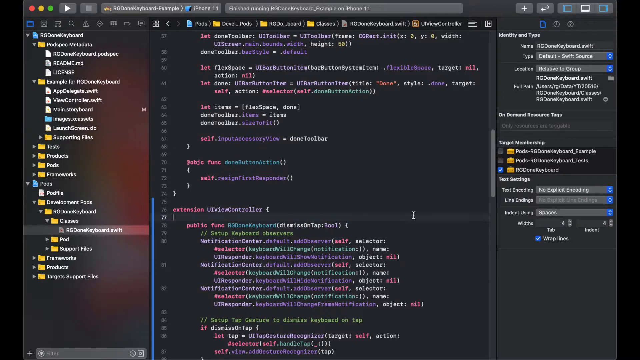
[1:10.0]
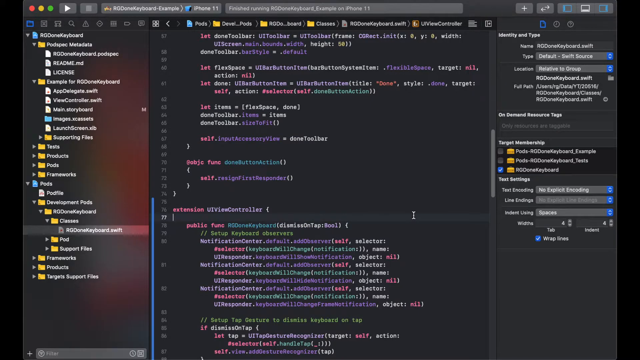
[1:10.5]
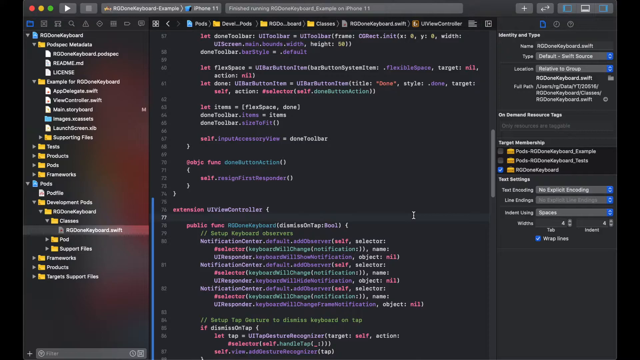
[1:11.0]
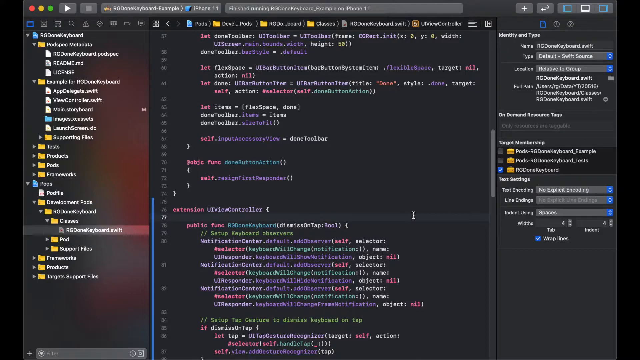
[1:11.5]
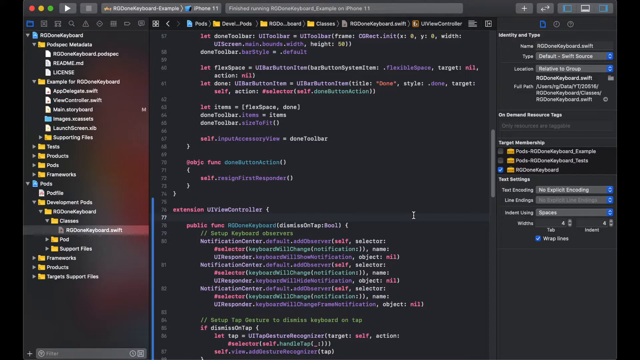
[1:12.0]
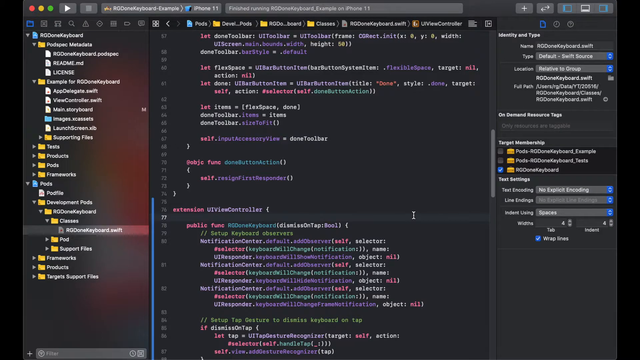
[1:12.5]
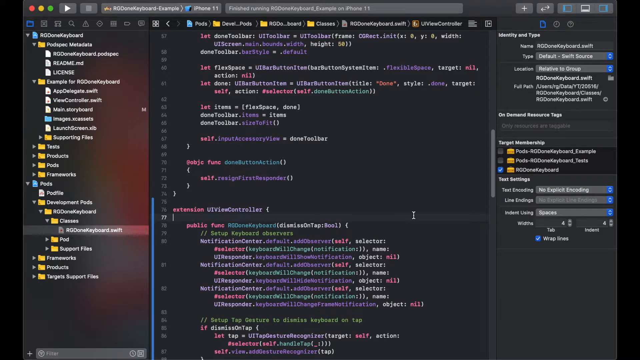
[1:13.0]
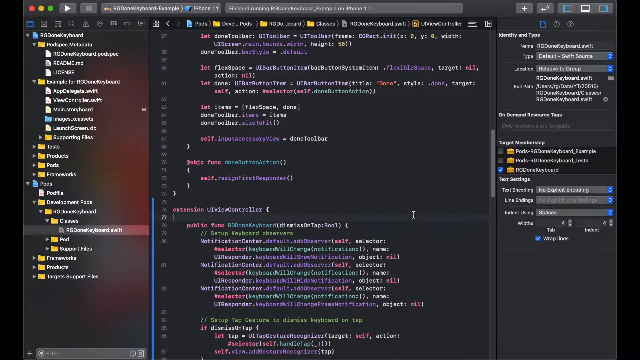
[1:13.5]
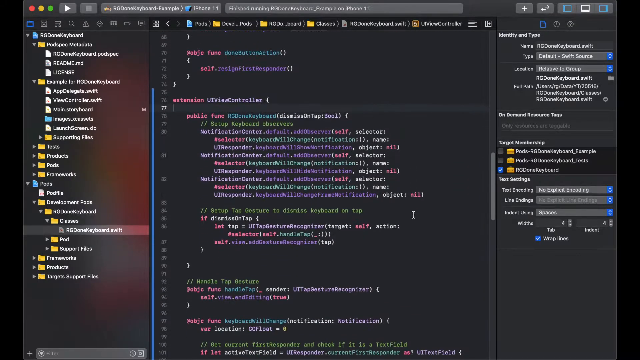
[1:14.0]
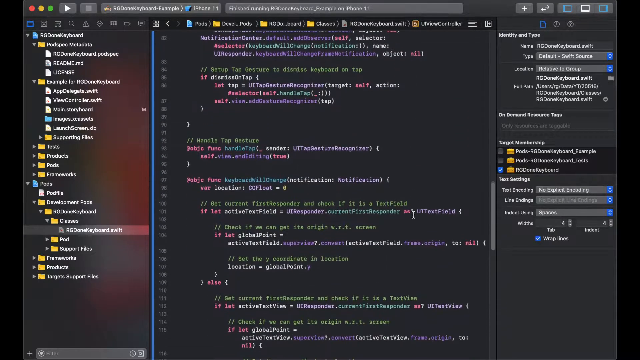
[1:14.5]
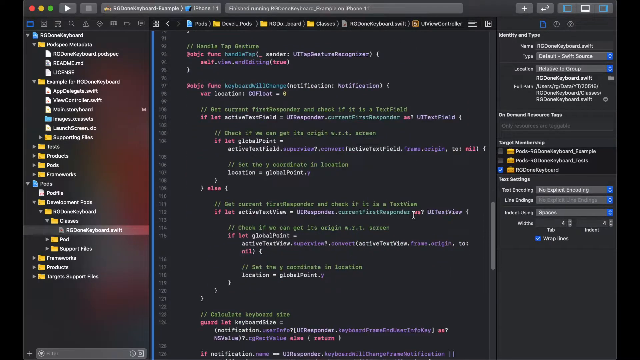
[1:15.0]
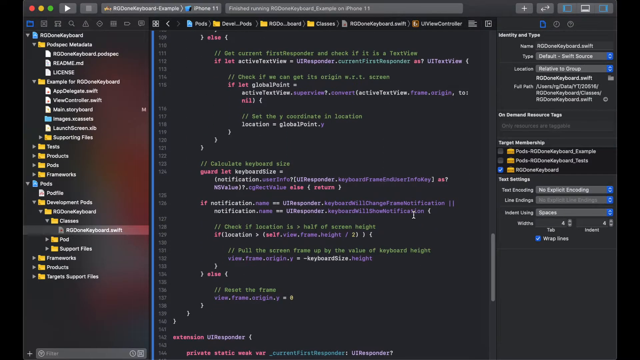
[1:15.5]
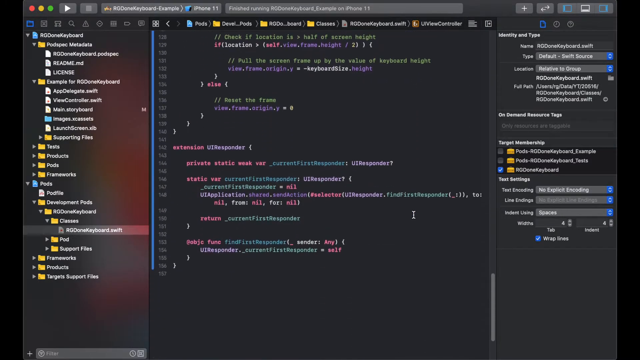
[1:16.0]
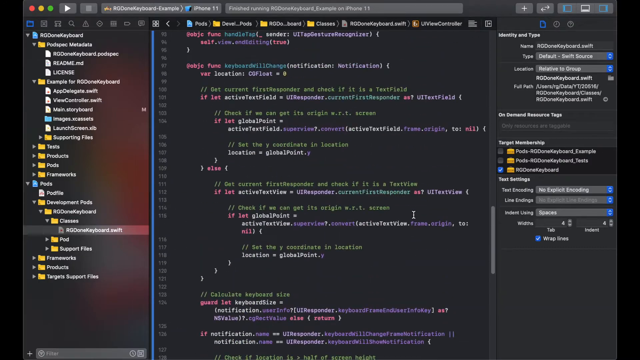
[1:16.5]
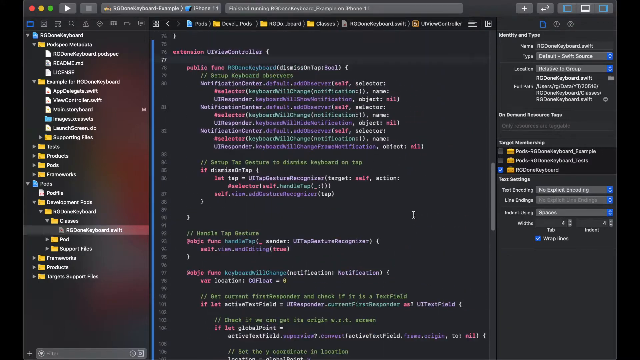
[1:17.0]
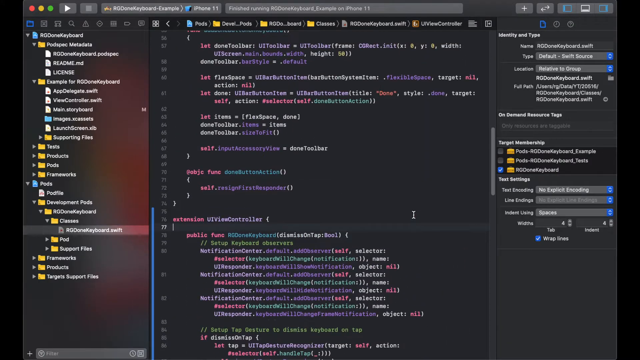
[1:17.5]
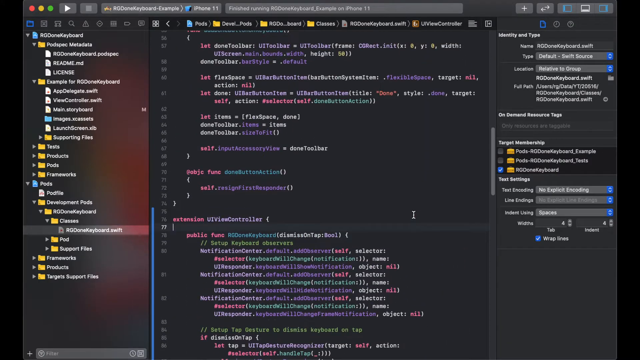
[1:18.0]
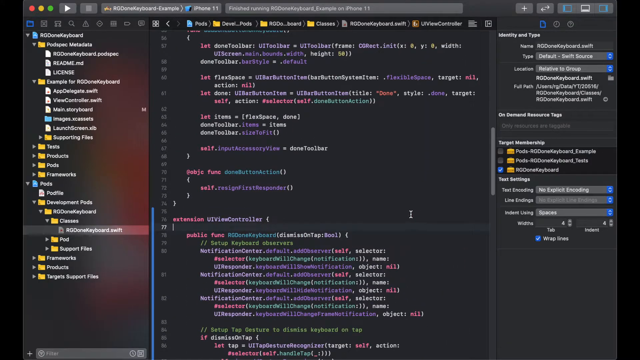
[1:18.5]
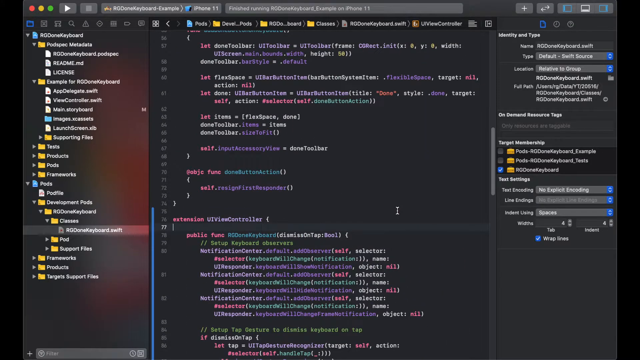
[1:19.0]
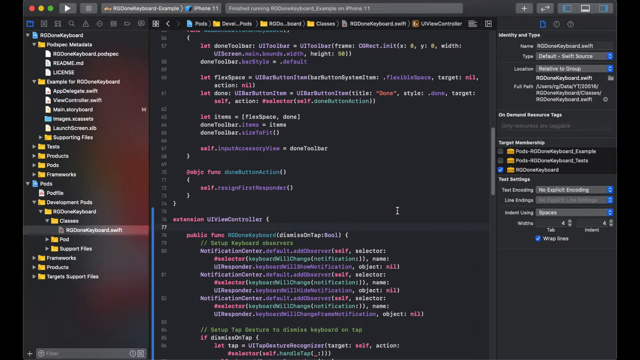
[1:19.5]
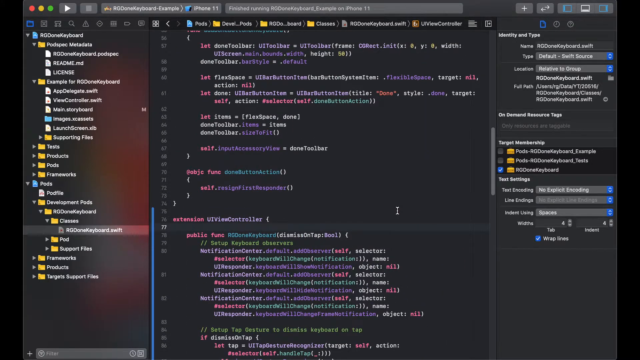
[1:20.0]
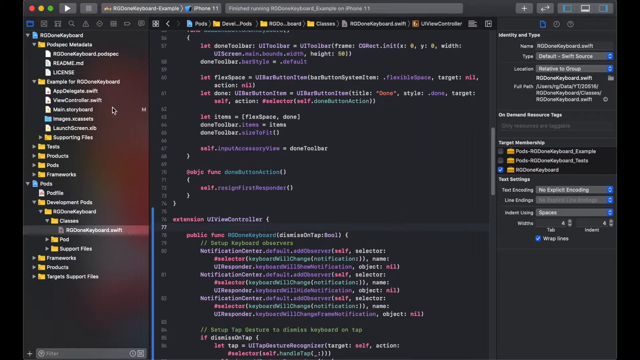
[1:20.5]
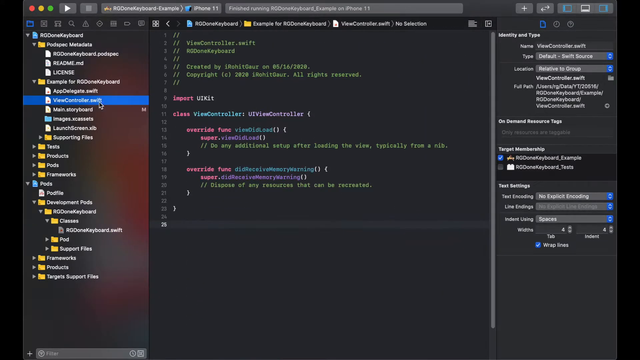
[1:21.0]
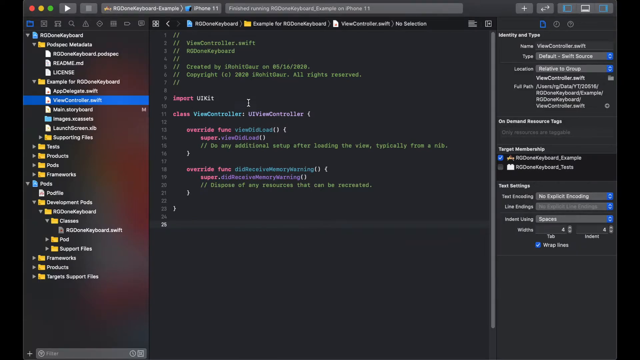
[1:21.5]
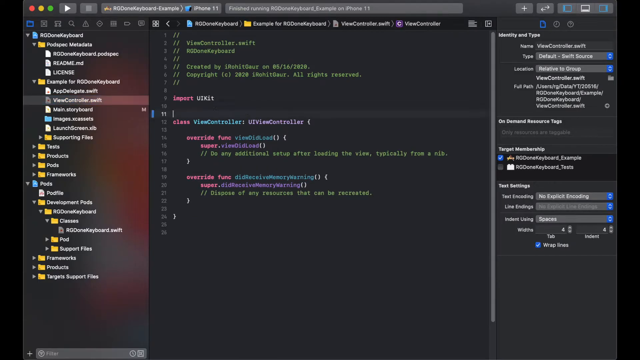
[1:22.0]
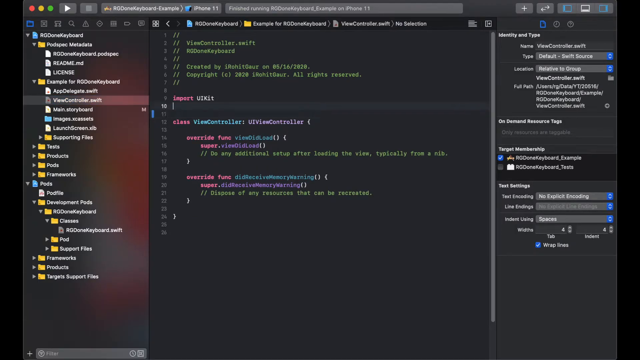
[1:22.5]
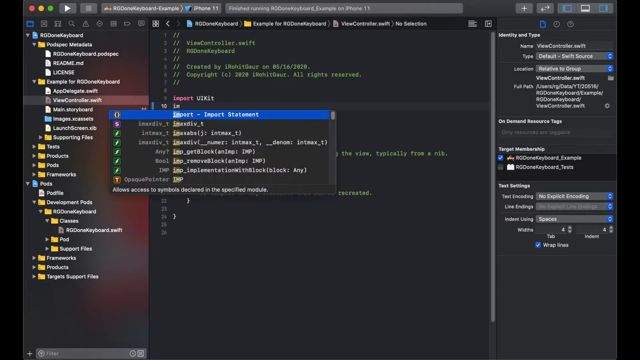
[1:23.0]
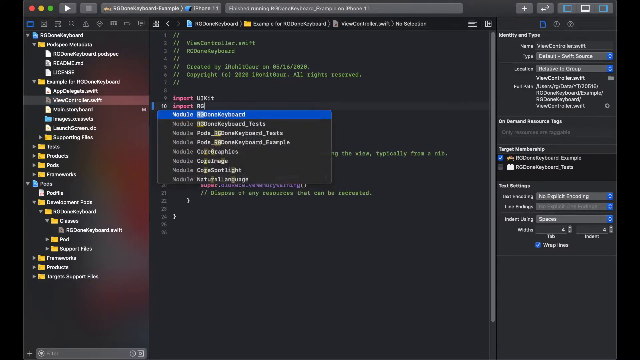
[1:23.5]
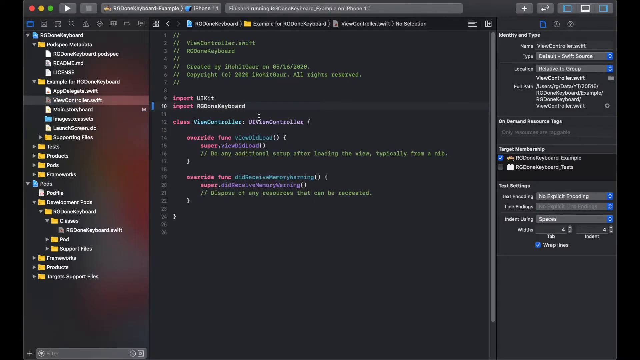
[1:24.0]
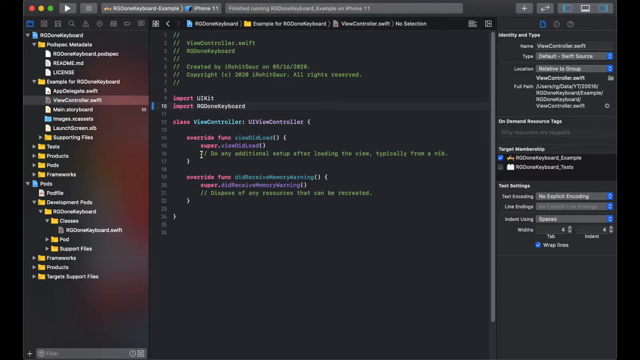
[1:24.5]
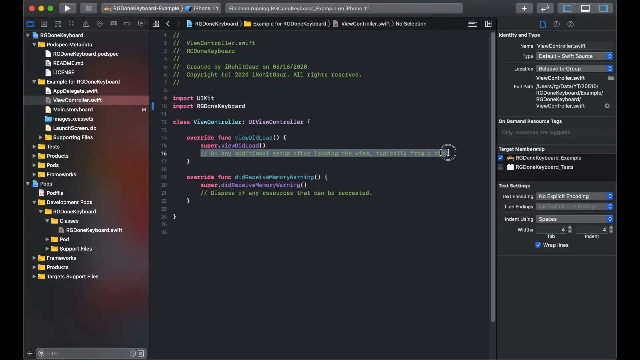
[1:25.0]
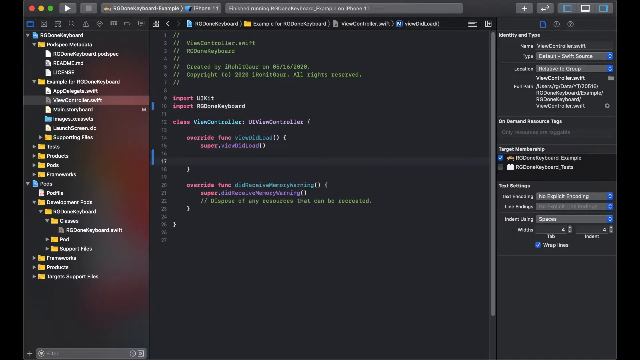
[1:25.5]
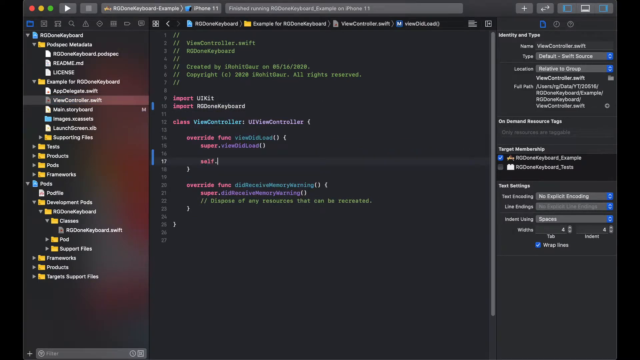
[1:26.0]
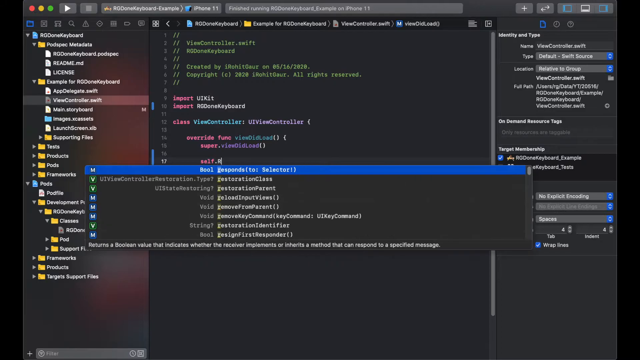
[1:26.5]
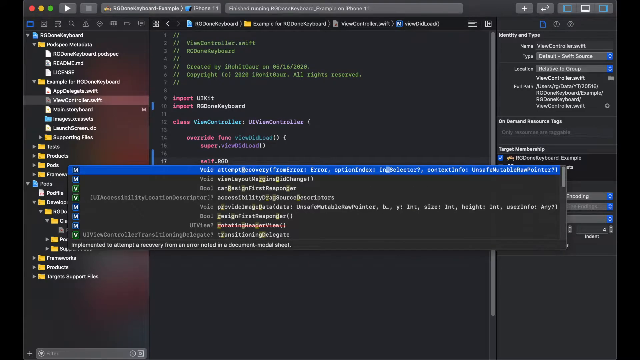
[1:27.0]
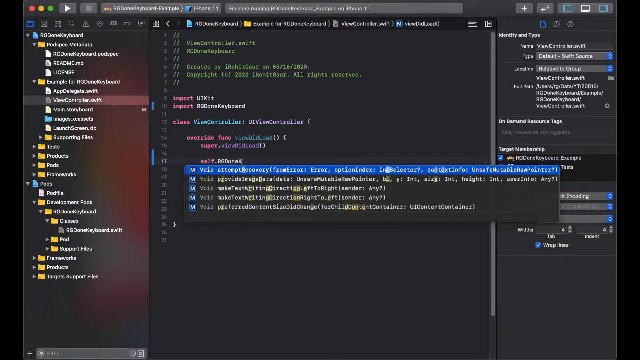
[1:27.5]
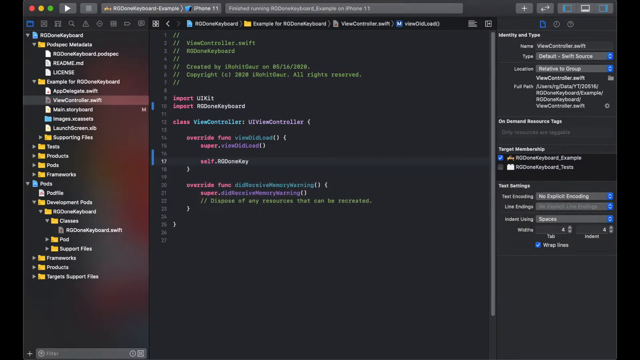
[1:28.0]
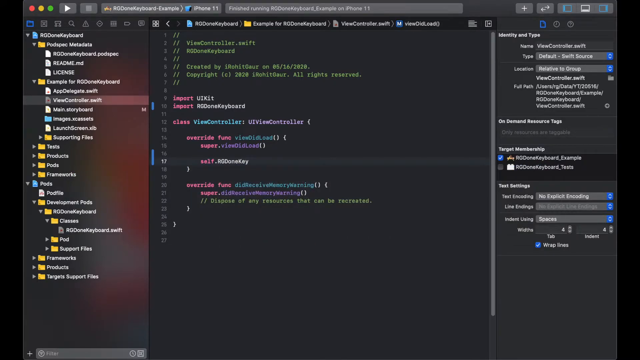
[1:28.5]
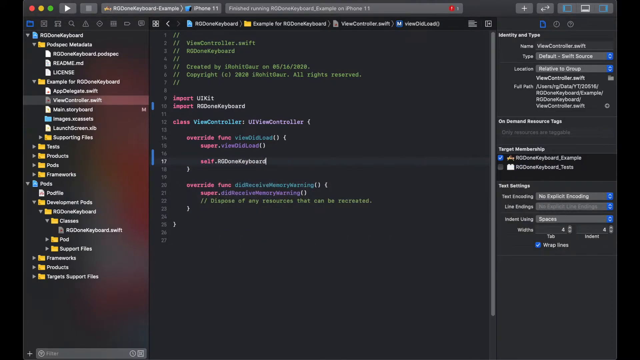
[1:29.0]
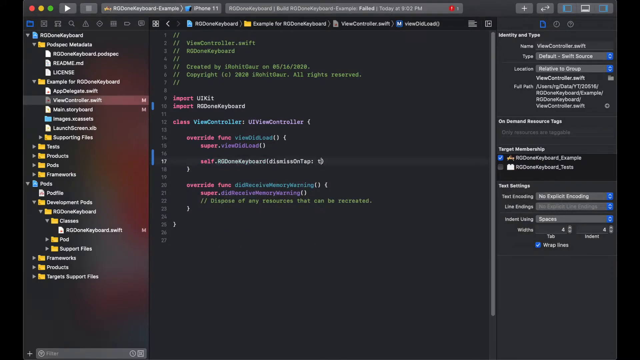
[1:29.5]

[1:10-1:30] The screen shows a computer page with a file explorer on the left-hand side, a big section of code in the middle, and more menu options on the right-hand side. The cursor is in text editing mode; it scrolls down and up the code, and the cursor blinks in the text field. The cursor moves left to the file explorer part of the page and selects an option, then clicks back into the code and types some text. It highlights some text, deletes it and types new text; as the text is typed, suggested options come up, some options are selected, and the line of code changes. The cursor scrolls down and up the code again and clicks into another section. Something on the left is selected and turned off. More typing follows, with further edits in the code, moving around and selecting different options.